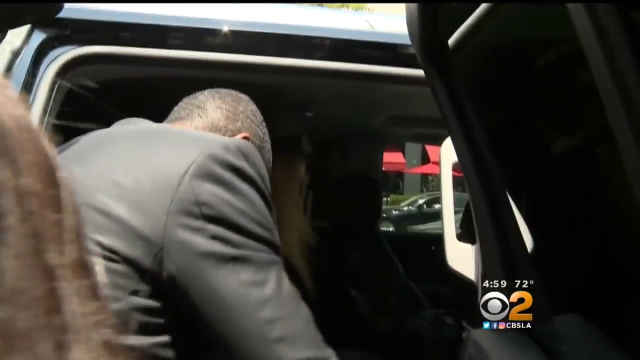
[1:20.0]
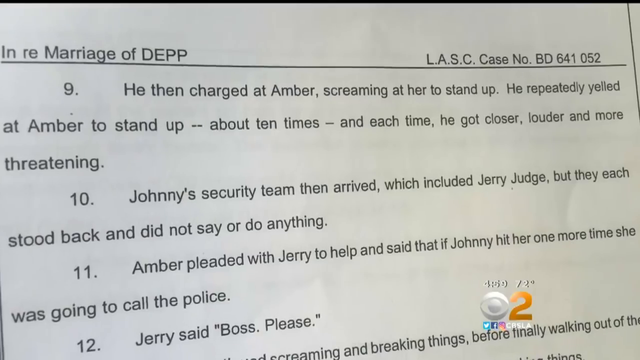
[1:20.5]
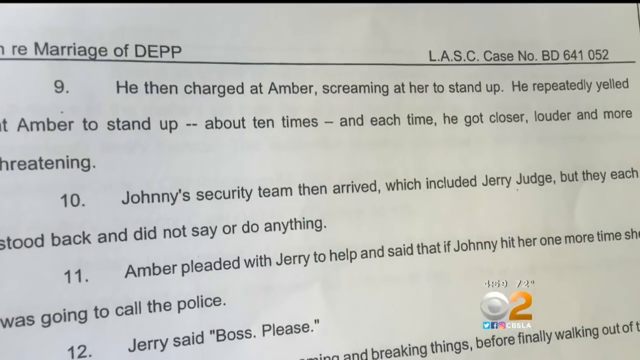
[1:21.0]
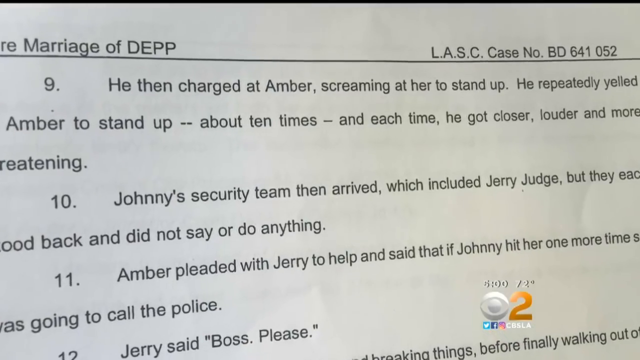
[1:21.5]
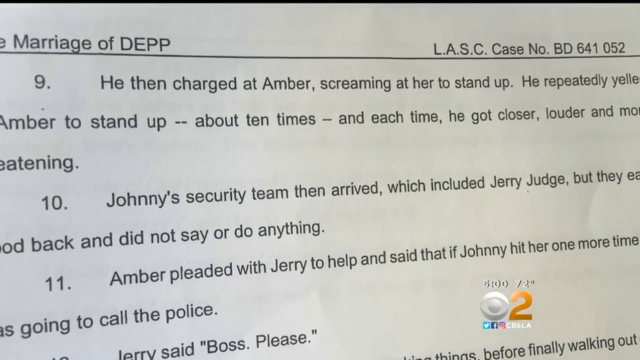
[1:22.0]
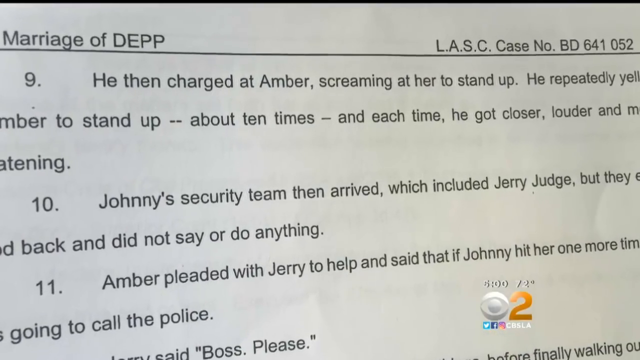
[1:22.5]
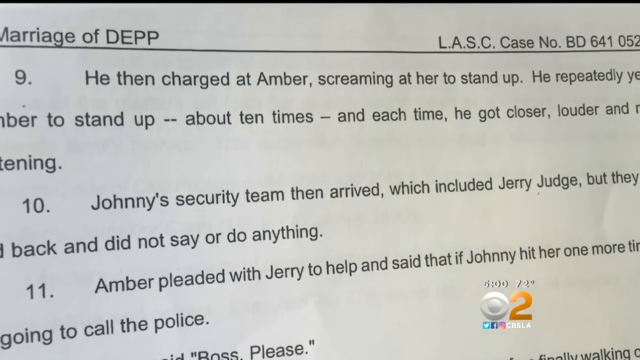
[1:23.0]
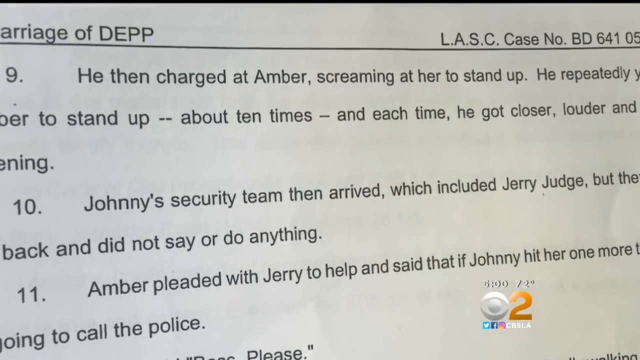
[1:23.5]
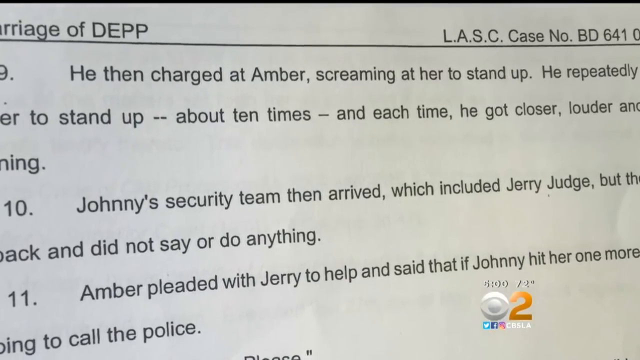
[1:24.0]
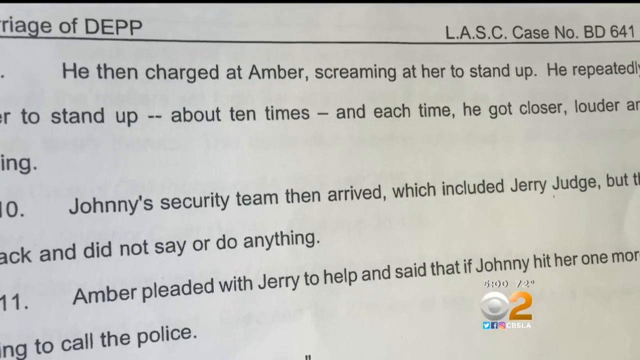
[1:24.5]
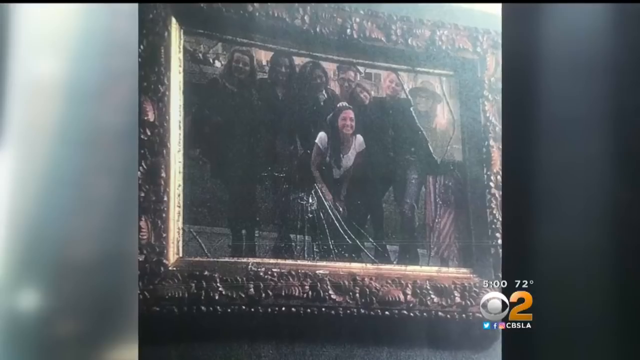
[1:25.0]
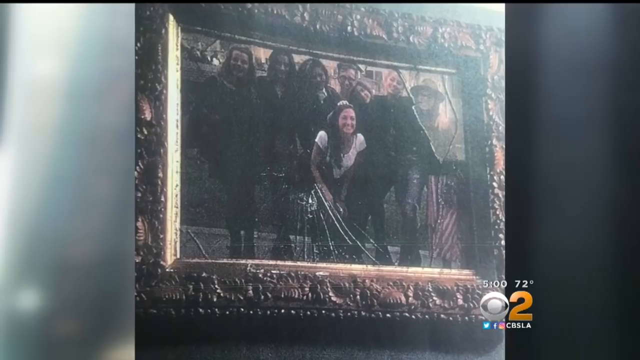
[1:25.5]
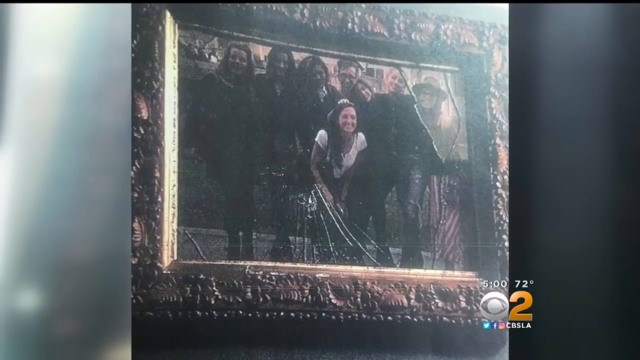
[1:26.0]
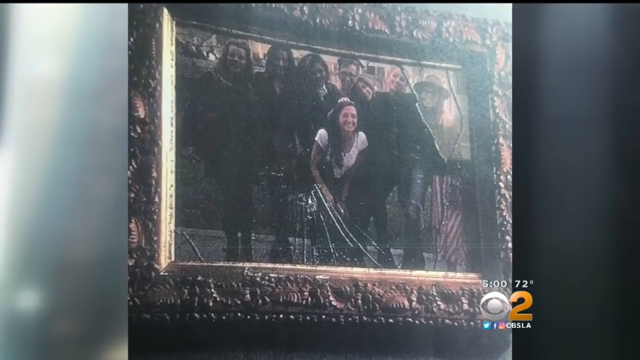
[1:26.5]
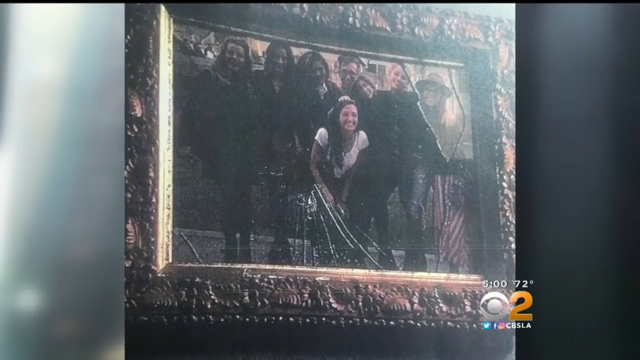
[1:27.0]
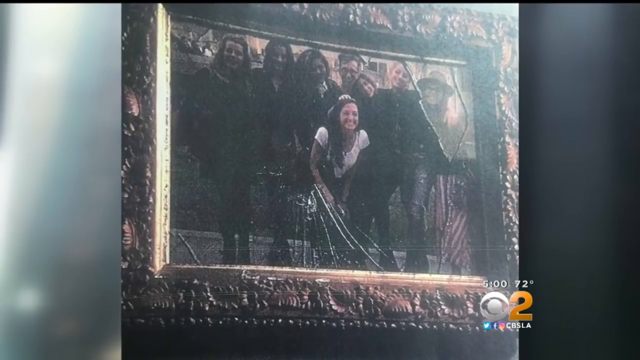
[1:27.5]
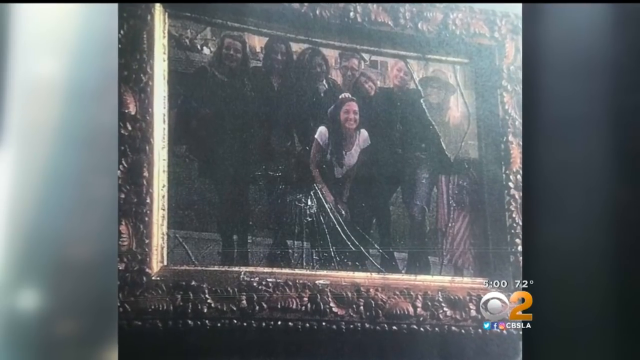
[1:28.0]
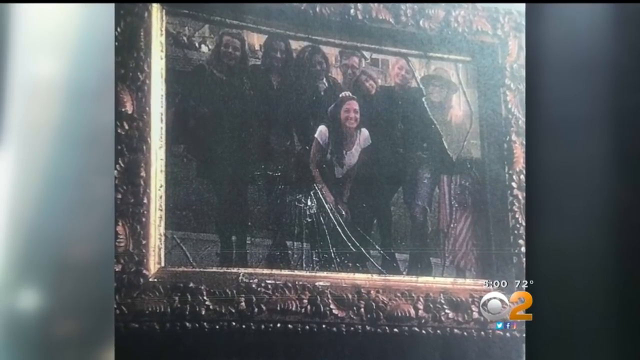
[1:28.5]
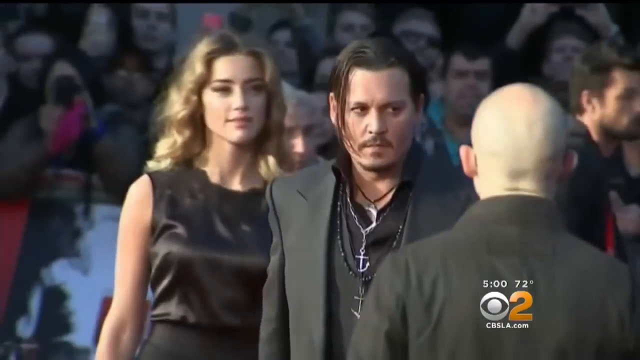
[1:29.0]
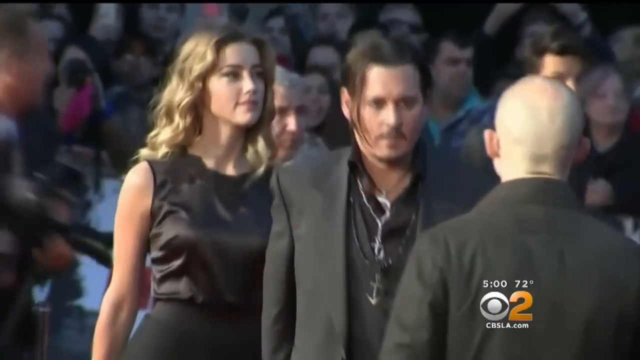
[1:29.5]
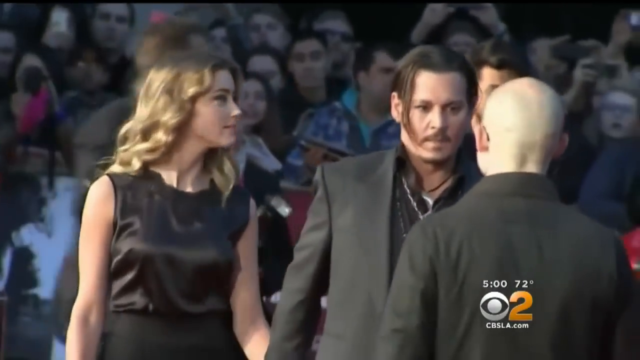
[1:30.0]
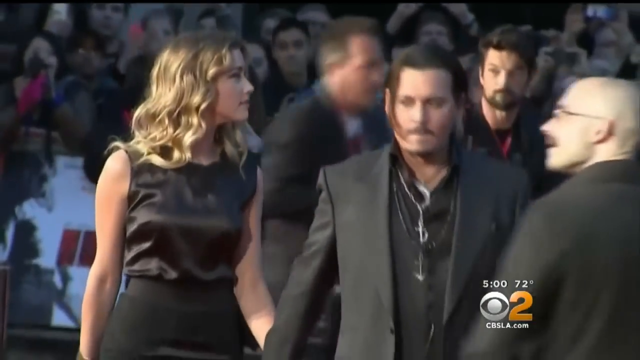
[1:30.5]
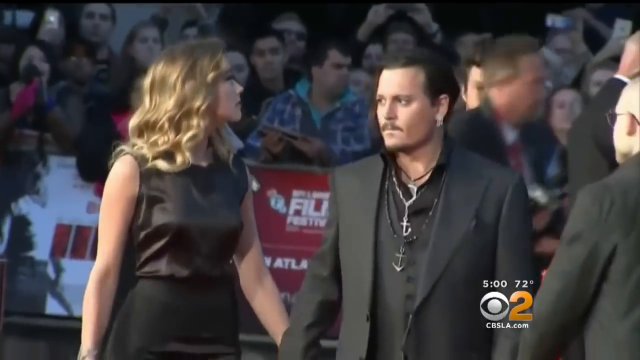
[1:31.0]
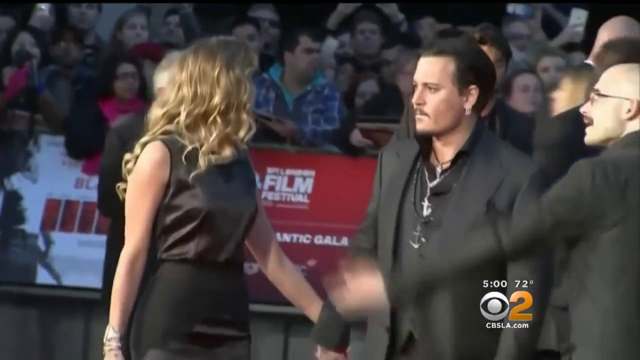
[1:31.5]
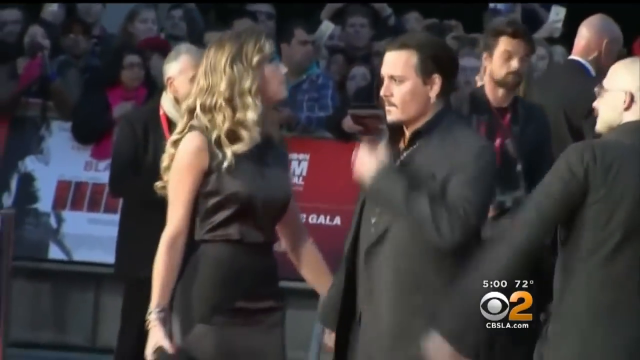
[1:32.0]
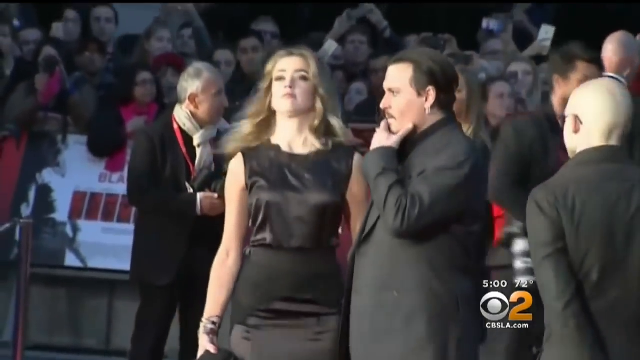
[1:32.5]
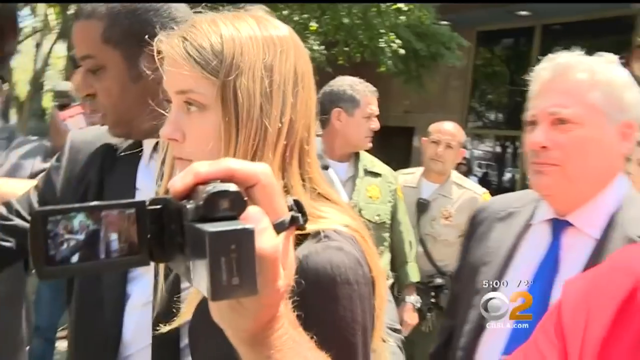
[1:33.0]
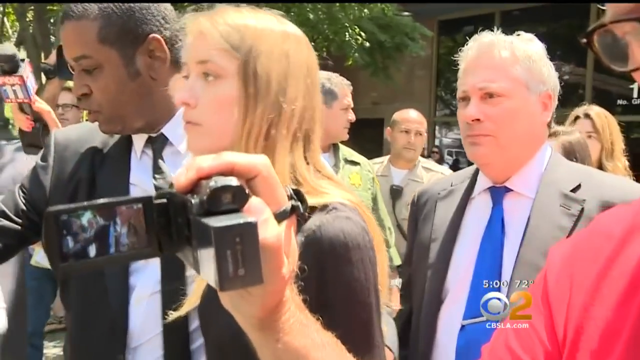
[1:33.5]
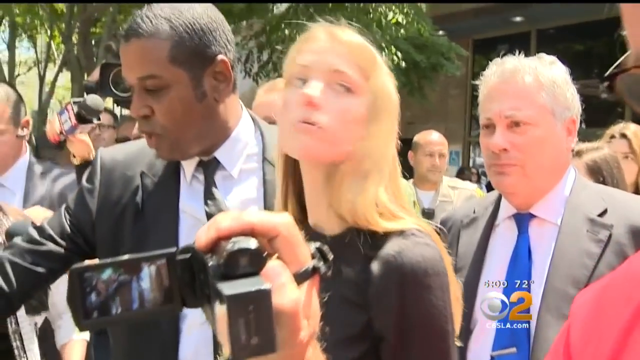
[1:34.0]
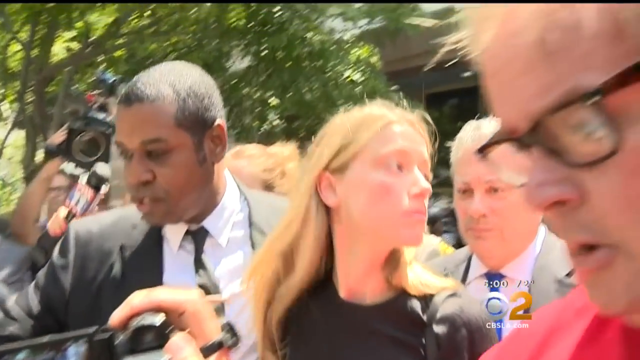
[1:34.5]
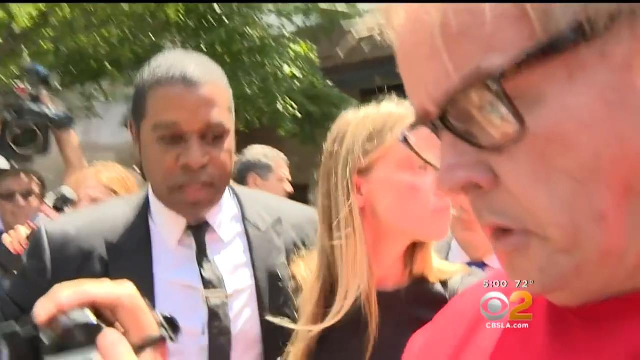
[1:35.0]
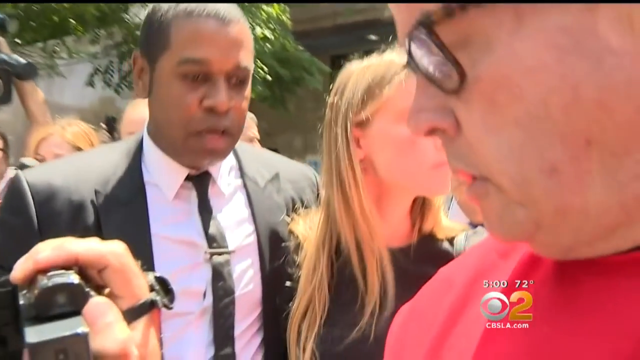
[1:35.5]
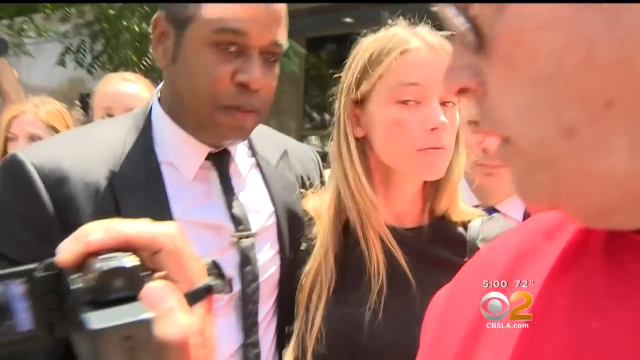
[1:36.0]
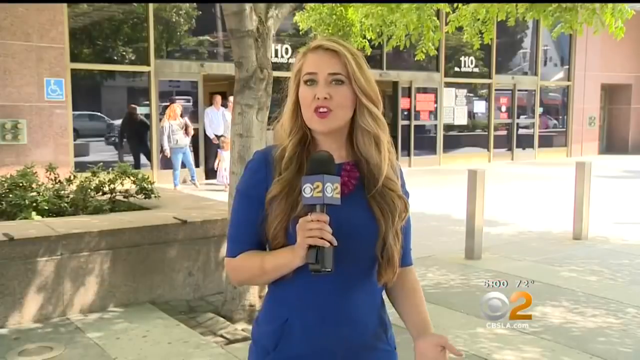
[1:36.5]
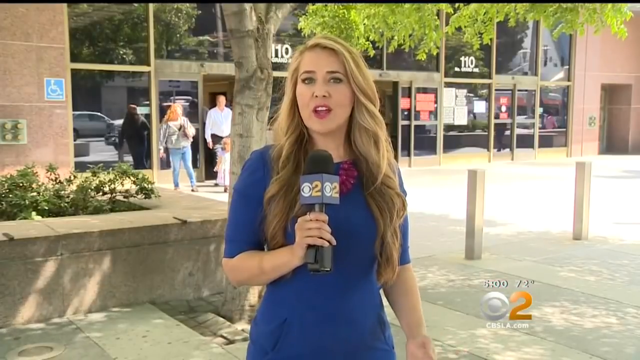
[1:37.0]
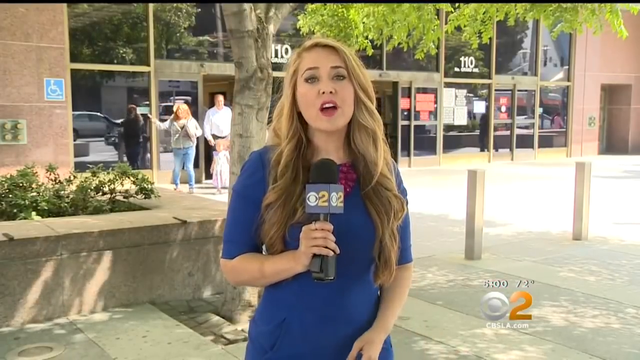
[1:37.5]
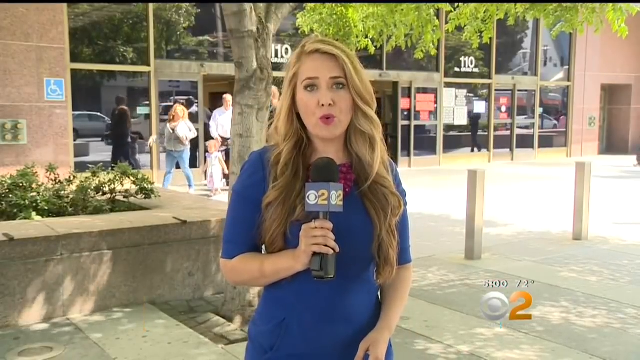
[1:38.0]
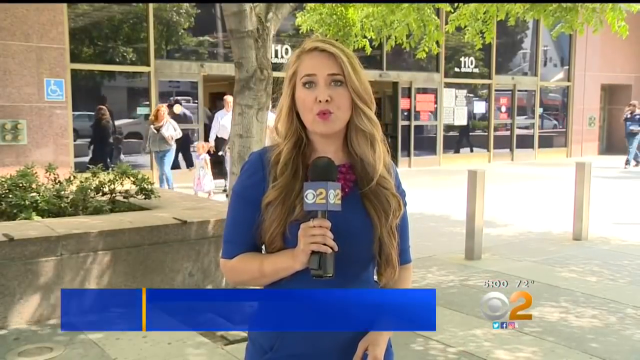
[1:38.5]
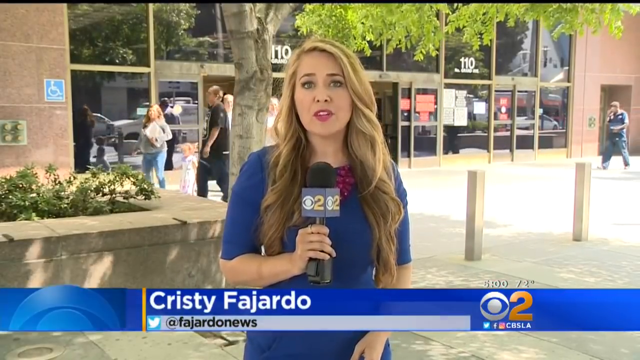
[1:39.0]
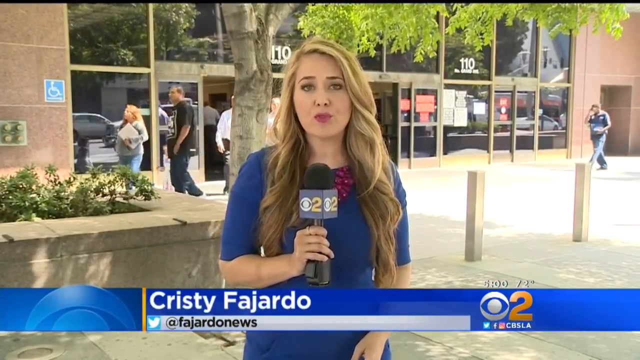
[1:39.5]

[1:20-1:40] The declaration document continues, stating that Amber pleaded with Jerry to help and said that if Johnny hit her one more time she was going to call the police, and that Jerry then said, "Boss, please." Next is a picture of what seem to be actors from a movie, with Johnny Depp among them; the picture is broken and its glass is shattered. Footage follows of Johnny Depp and Amber Heard holding hands at some kind of gala, then footage of Amber Heard being protected by security guards and a personal bodyguard. CBS LA news reporter Christy Fajardo then appears, with her Twitter, Fajardo News, shown. She is talking about the case in front of a building that seems to be the same building Amber Heard came out of and is possibly the Depp couple's residence.